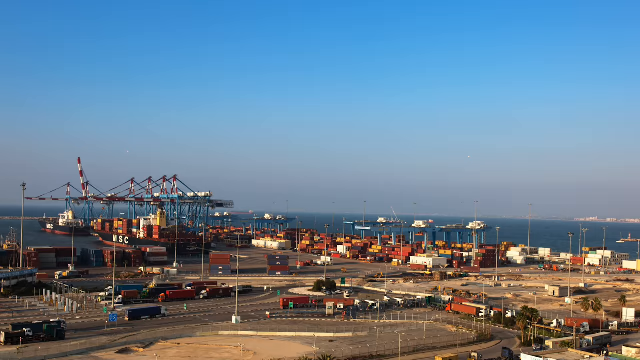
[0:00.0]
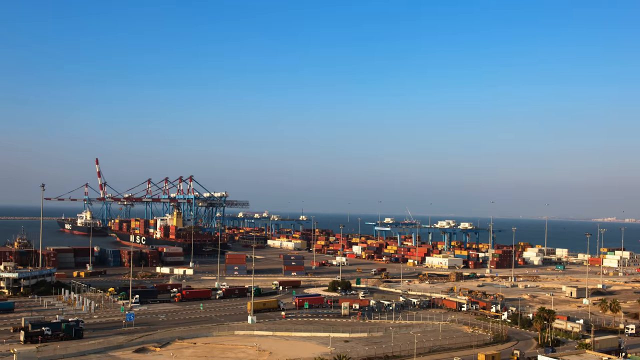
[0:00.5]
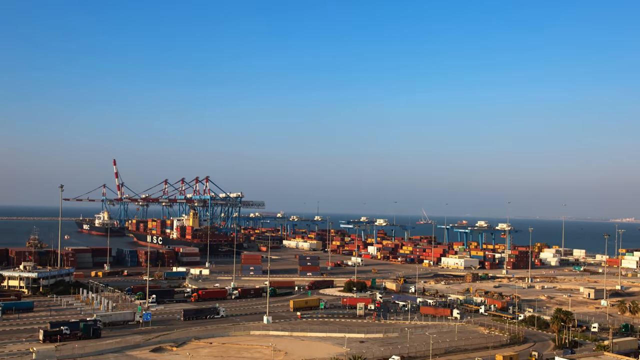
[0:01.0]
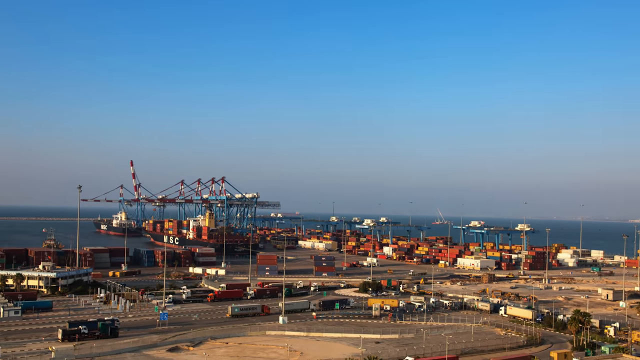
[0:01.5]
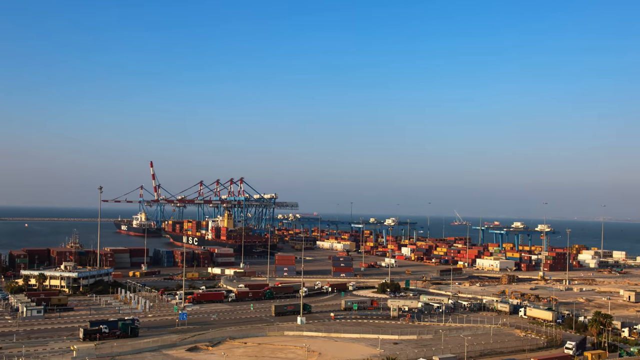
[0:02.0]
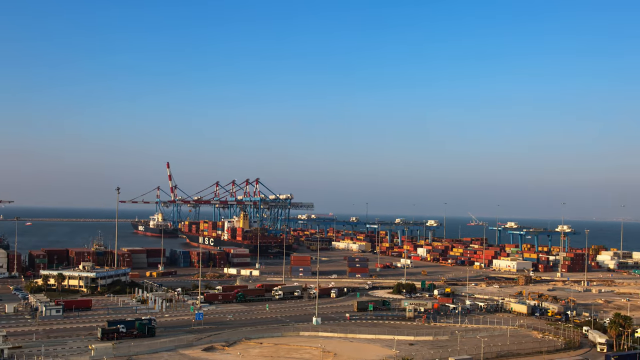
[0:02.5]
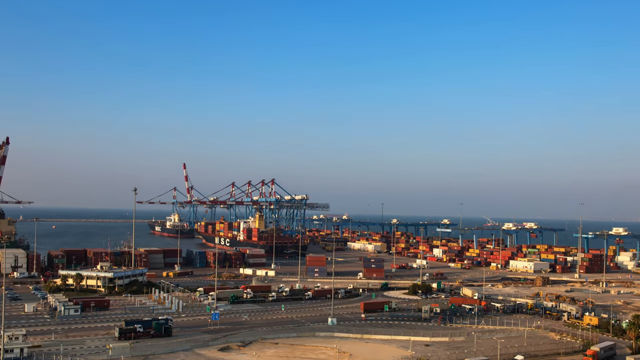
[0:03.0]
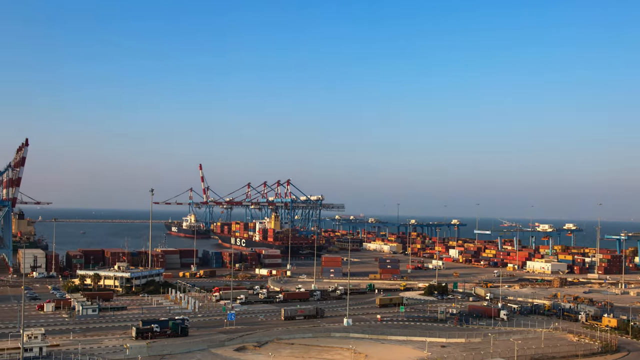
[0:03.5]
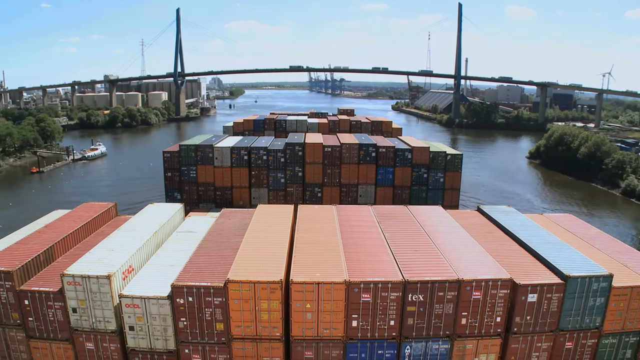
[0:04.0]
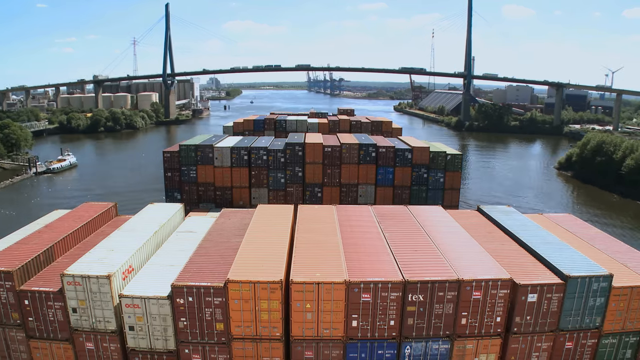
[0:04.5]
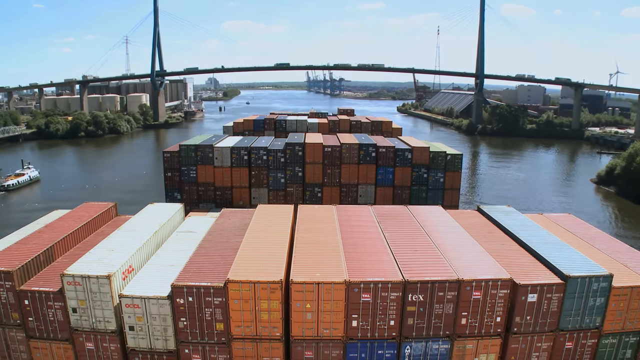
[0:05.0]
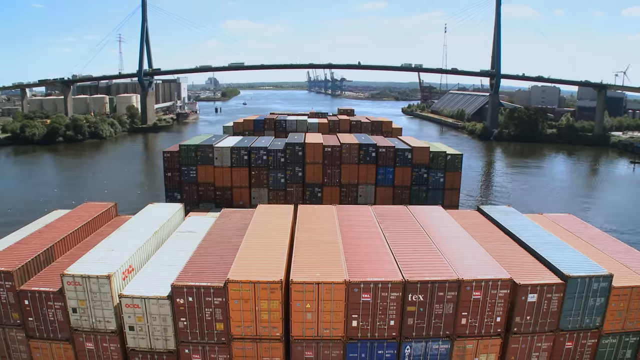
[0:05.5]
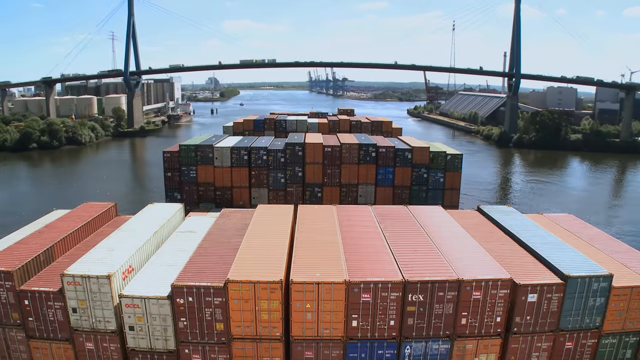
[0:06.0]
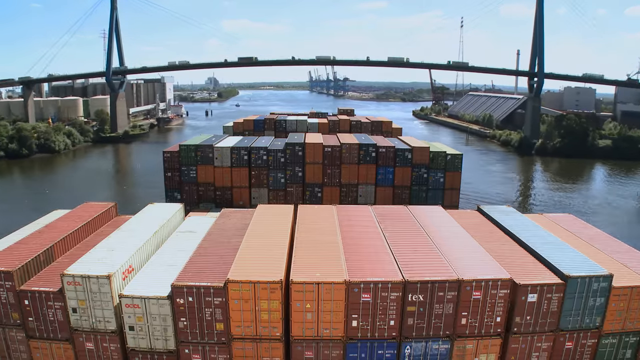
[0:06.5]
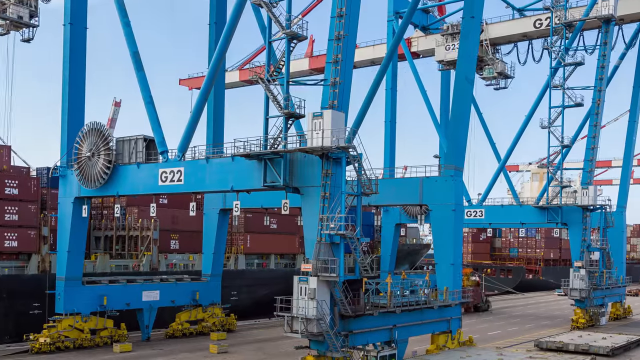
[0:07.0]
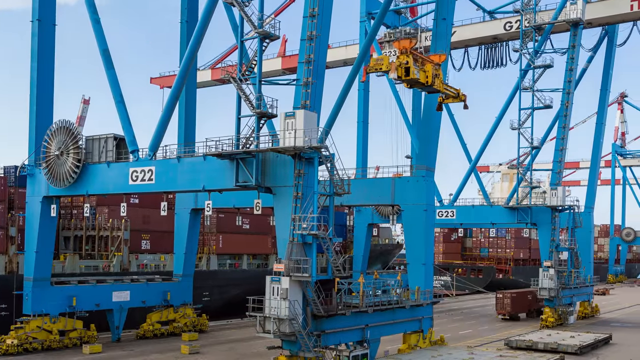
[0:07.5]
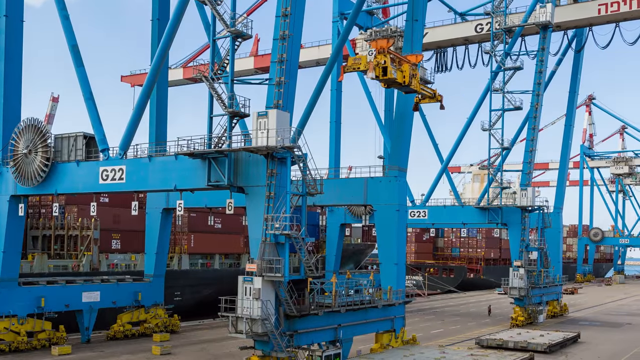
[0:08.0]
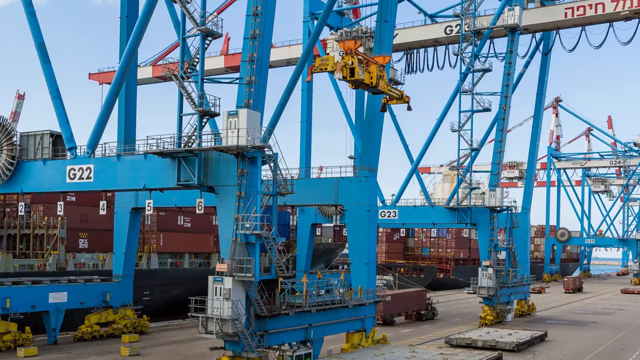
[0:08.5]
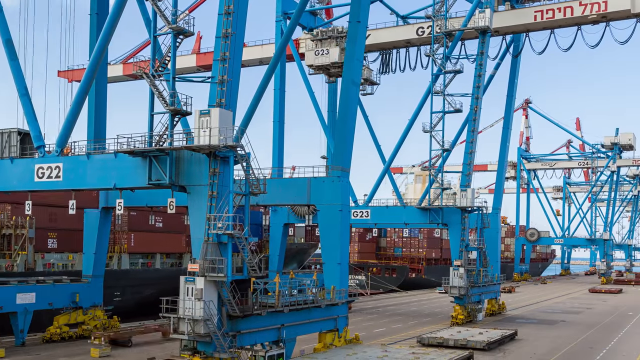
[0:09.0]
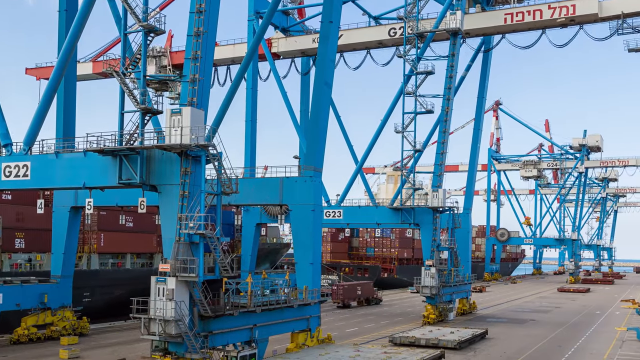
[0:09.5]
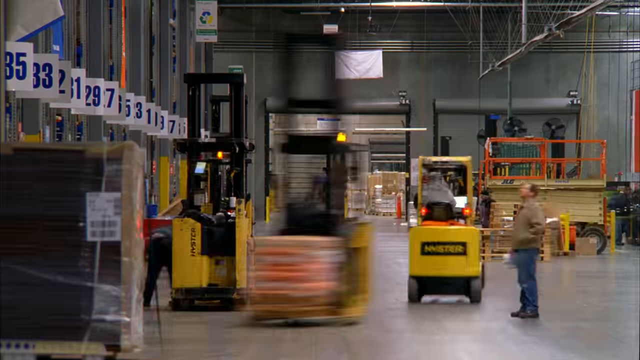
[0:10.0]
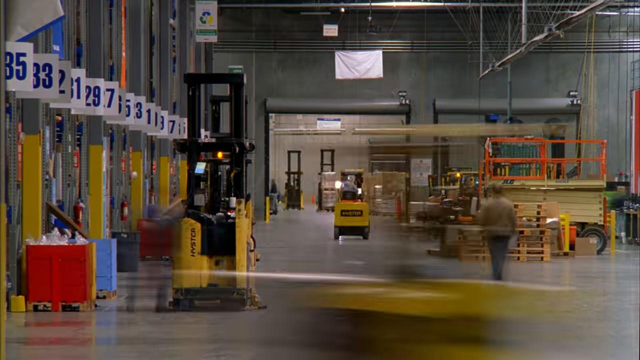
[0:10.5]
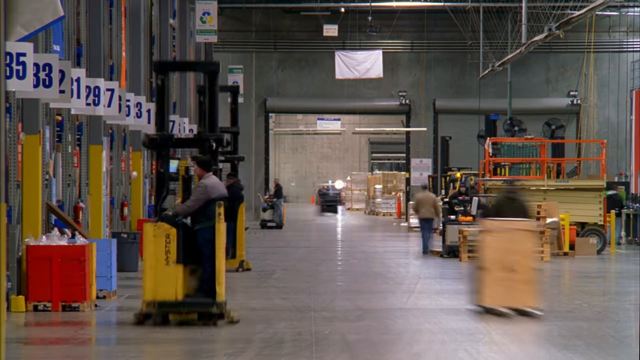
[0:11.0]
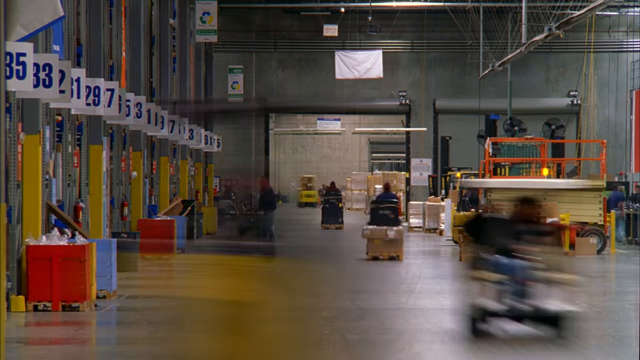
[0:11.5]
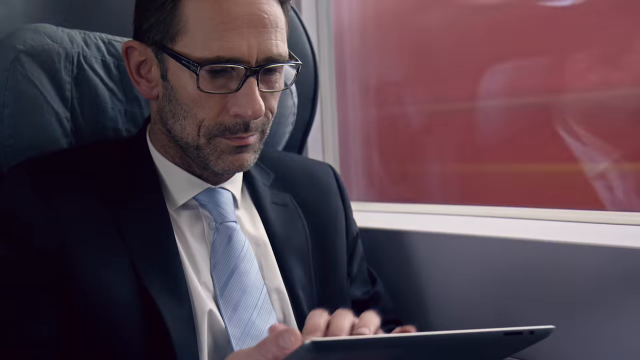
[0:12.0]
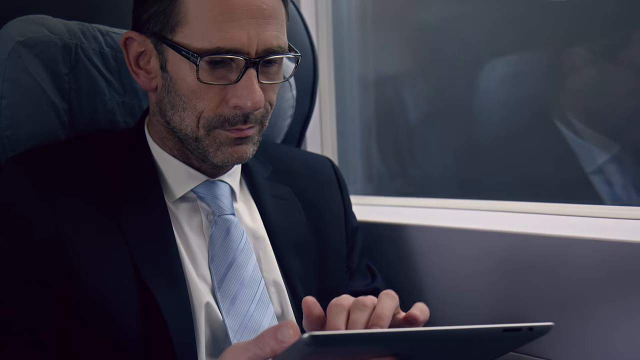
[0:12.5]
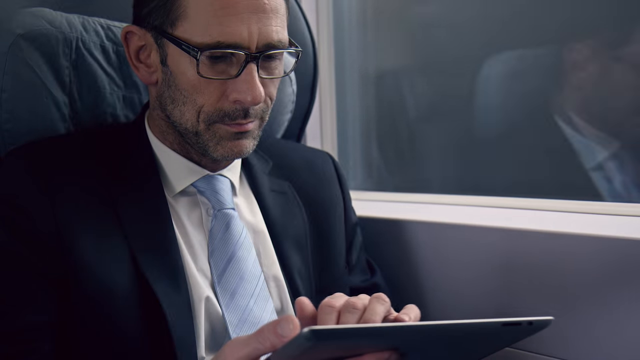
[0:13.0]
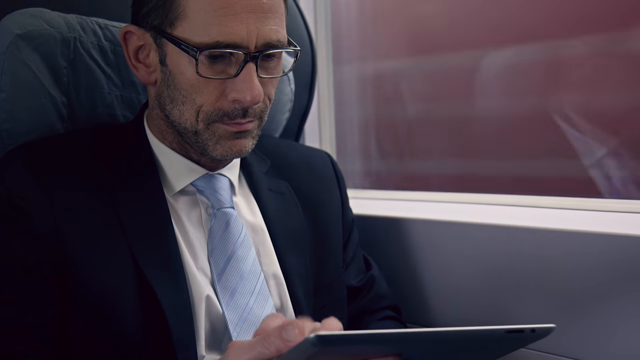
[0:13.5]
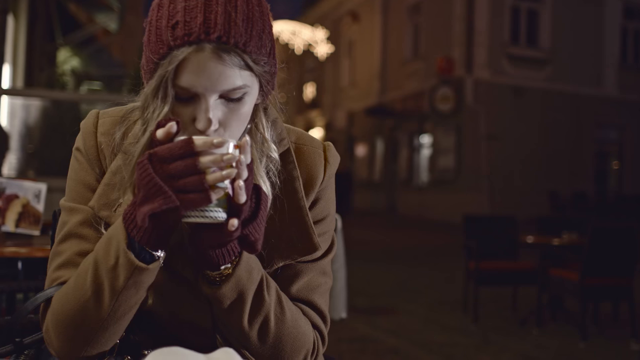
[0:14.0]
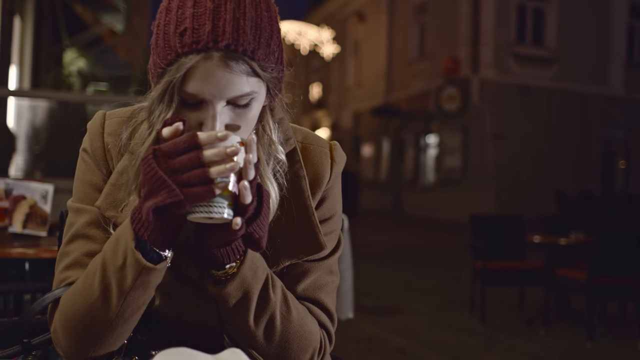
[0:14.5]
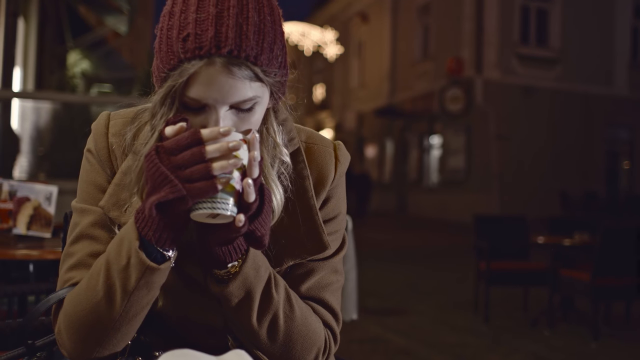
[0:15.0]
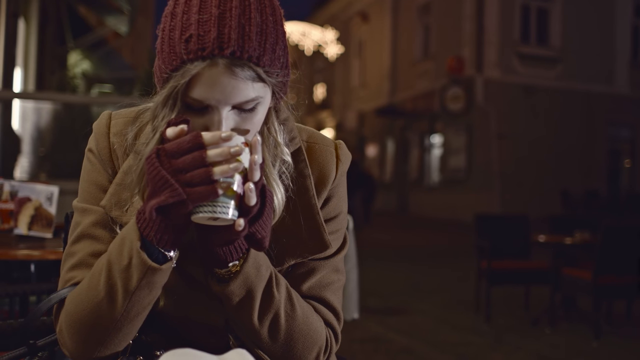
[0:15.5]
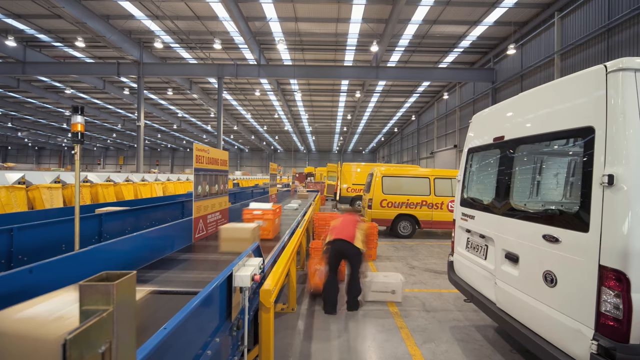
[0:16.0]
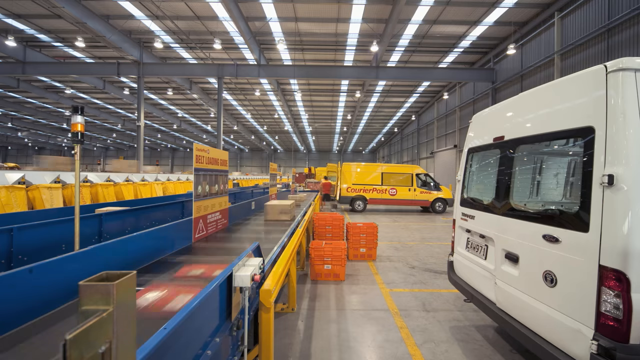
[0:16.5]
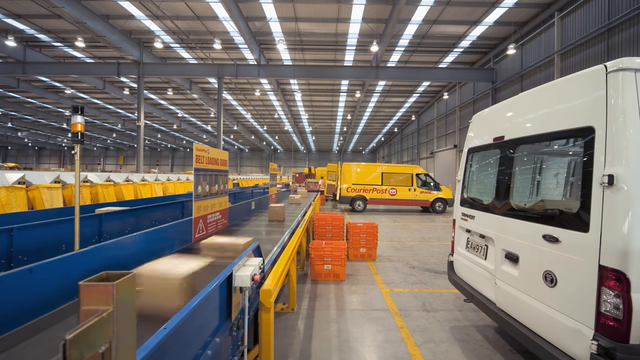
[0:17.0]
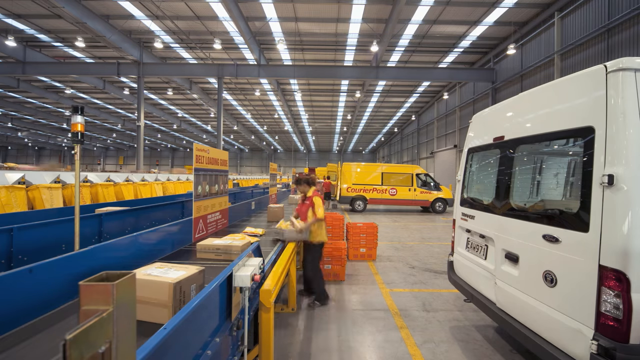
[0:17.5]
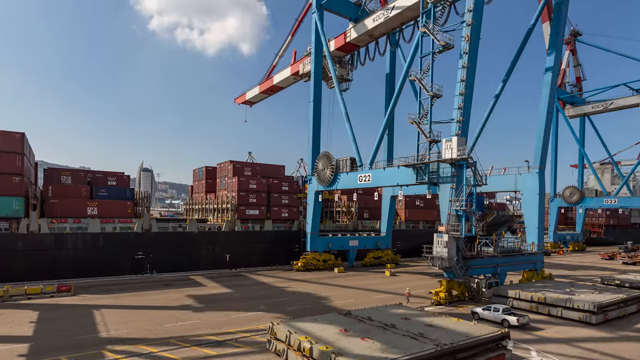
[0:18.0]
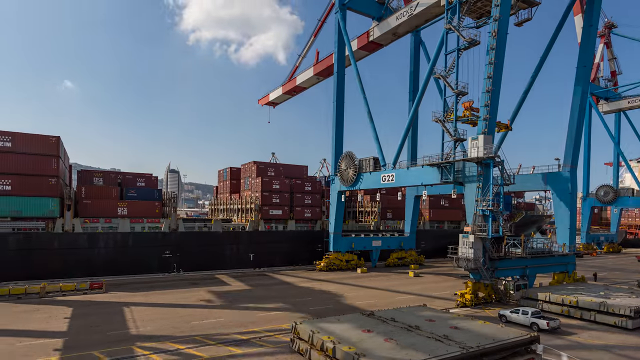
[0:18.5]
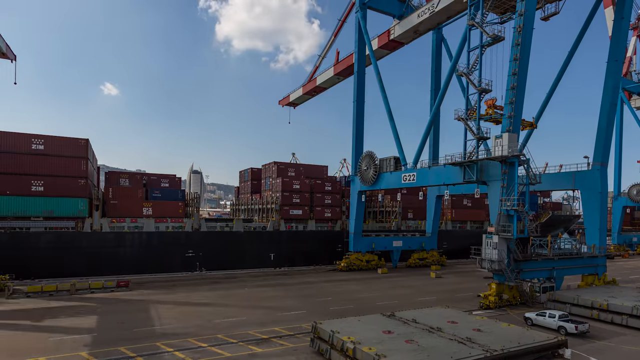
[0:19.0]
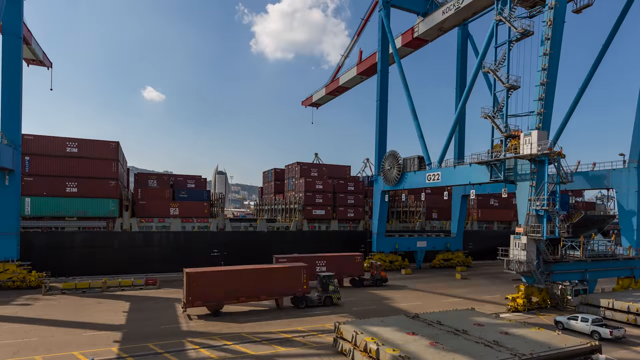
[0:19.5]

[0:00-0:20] A time-lapse sequence shows a busy port, with the ocean in the background and a big concrete area covered in shipping containers. Another time-lapse is filmed from the bow of a boat looking out over the boat, which is stacked with containers and goes under a bridge. A blue crane appears, and the camera pans to the right as the different mechanisms on the crane move around and cars drive around underneath it. Inside a factory, like the inside of a warehouse, a bunch of forklifts move around. A man sits in a train, and a woman in a bar drinks from a cup. Back inside the warehouse, several packages move along a conveyor belt.